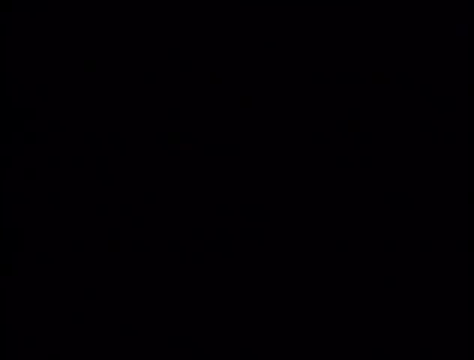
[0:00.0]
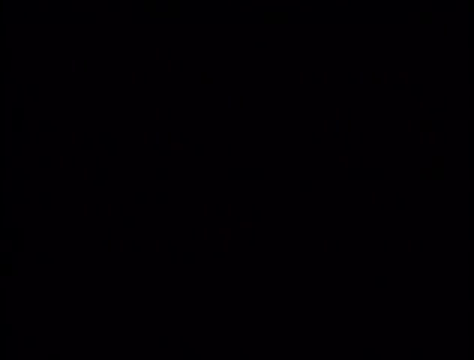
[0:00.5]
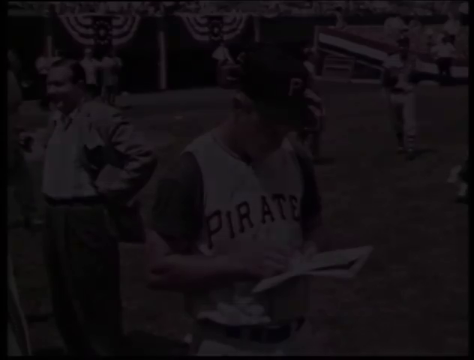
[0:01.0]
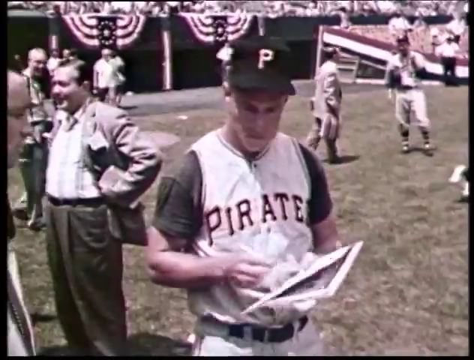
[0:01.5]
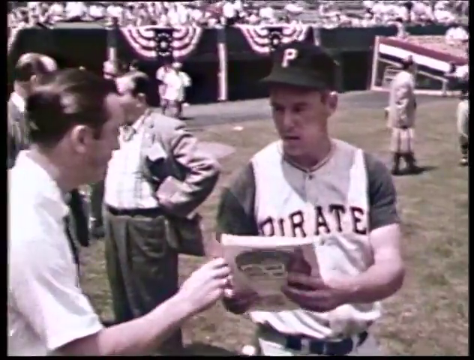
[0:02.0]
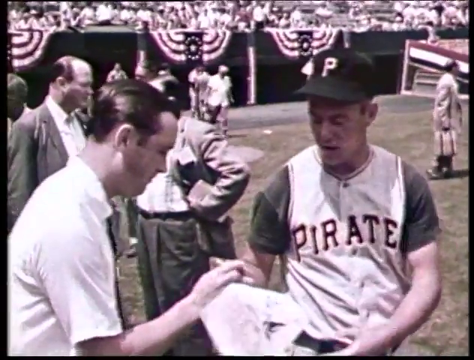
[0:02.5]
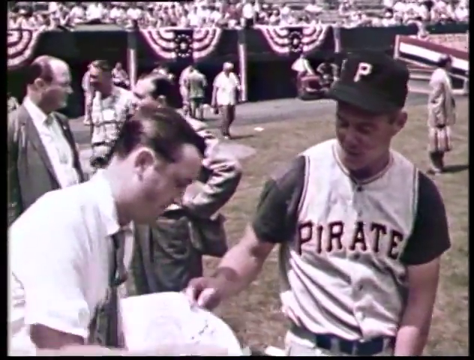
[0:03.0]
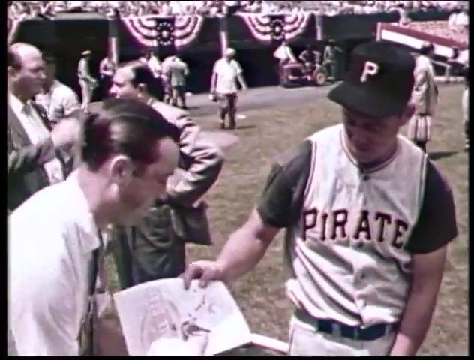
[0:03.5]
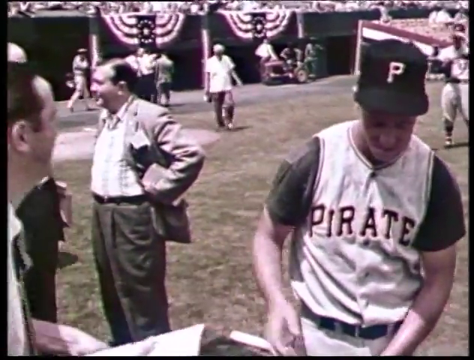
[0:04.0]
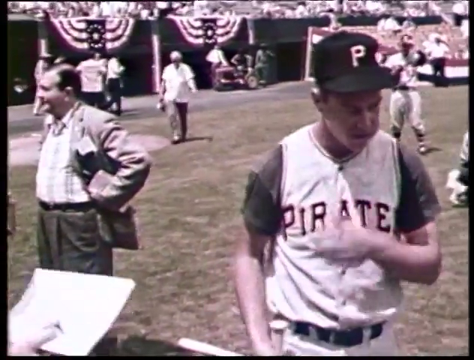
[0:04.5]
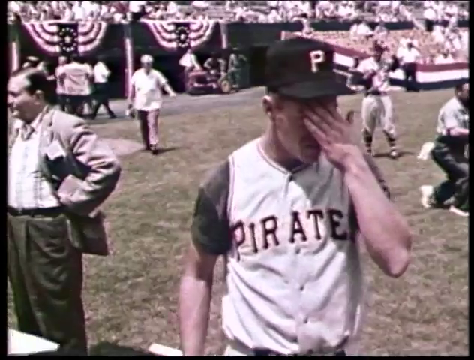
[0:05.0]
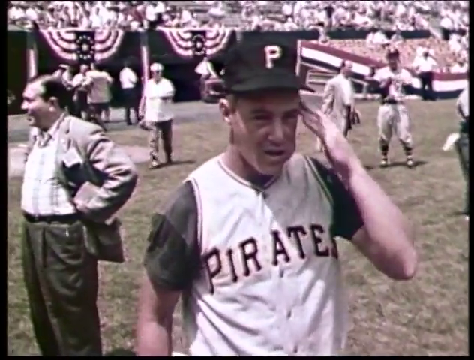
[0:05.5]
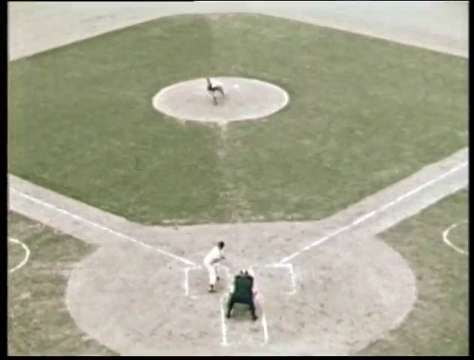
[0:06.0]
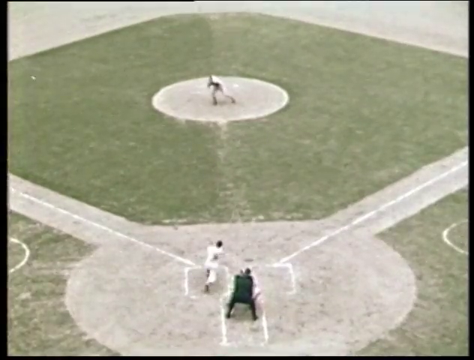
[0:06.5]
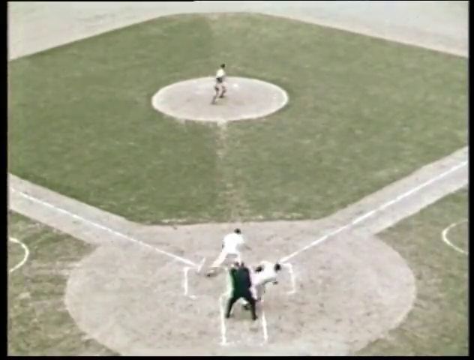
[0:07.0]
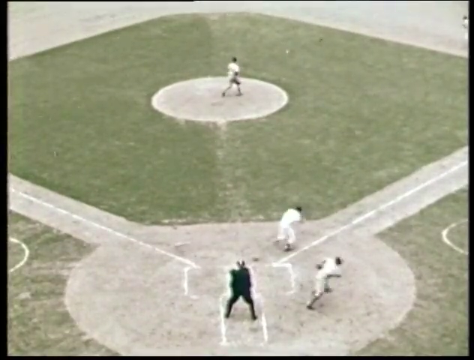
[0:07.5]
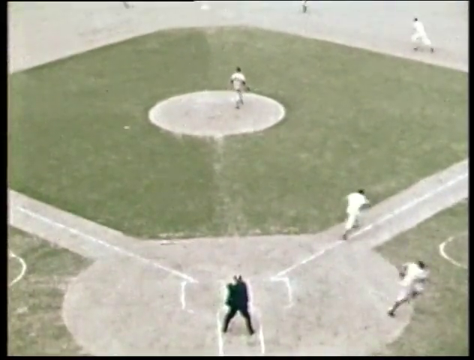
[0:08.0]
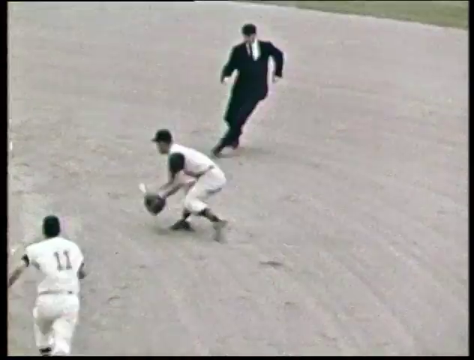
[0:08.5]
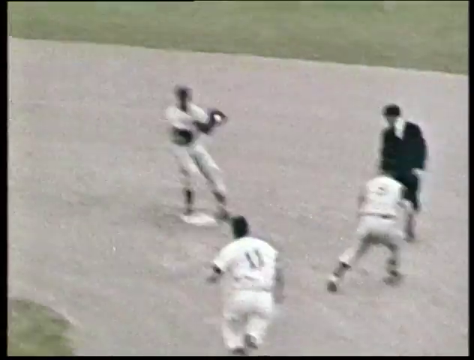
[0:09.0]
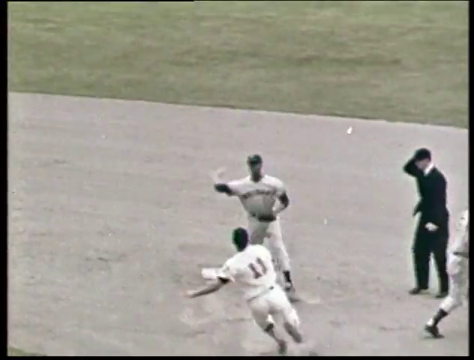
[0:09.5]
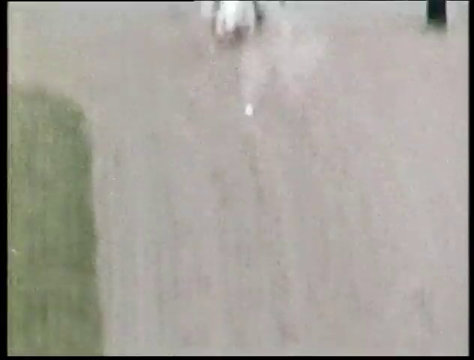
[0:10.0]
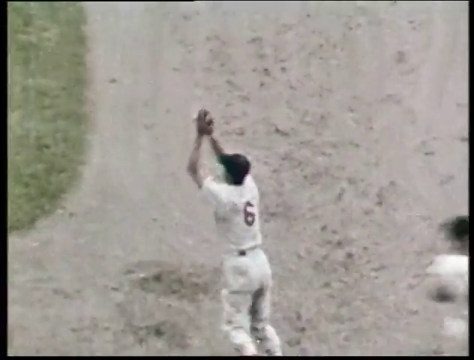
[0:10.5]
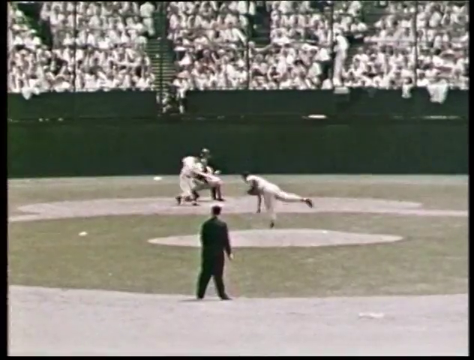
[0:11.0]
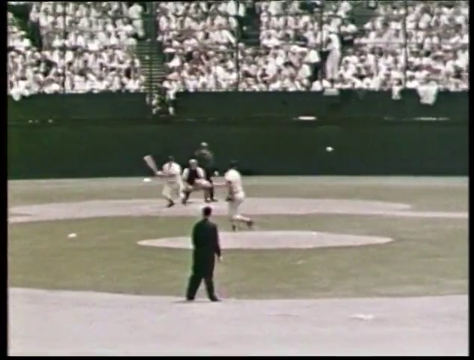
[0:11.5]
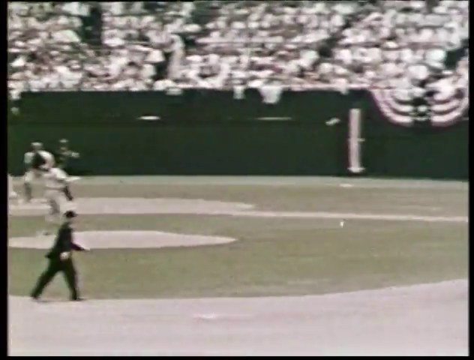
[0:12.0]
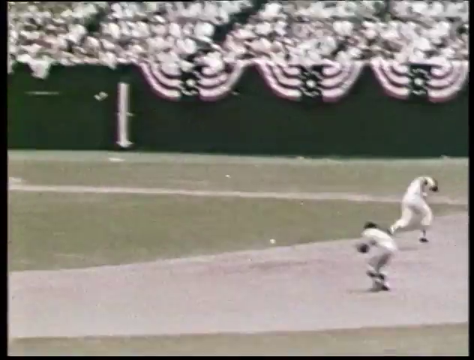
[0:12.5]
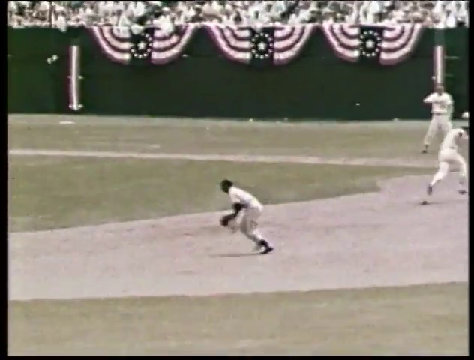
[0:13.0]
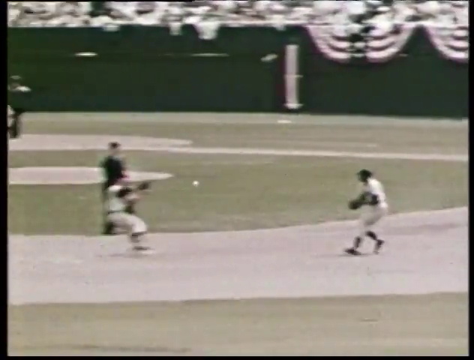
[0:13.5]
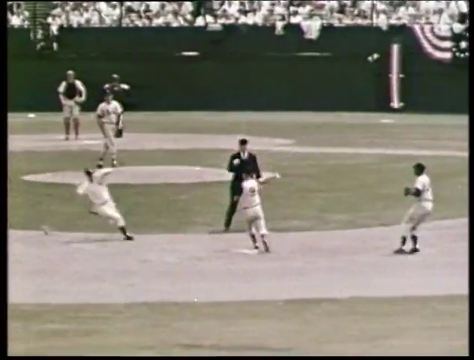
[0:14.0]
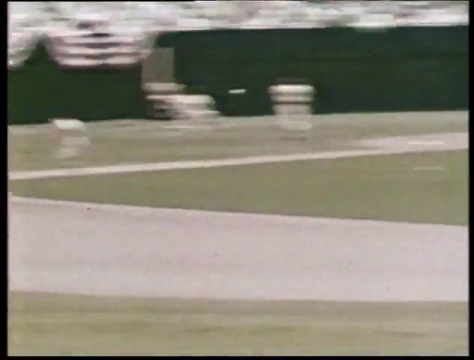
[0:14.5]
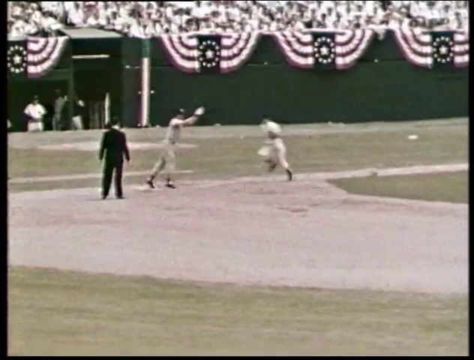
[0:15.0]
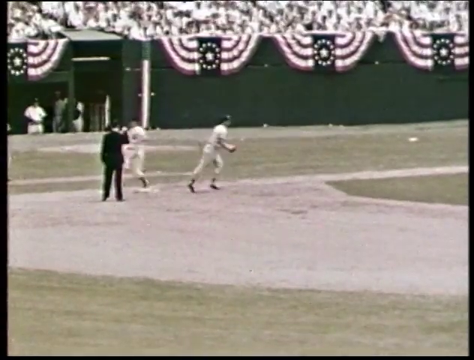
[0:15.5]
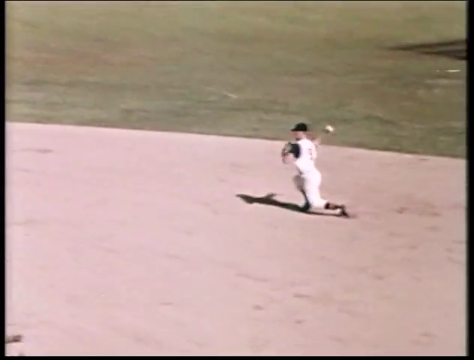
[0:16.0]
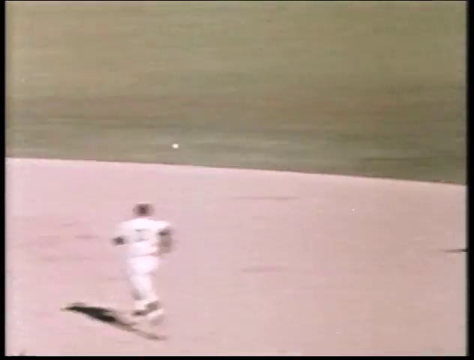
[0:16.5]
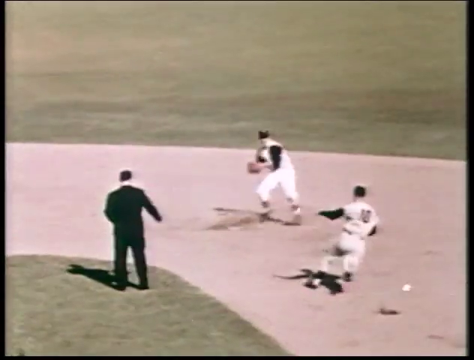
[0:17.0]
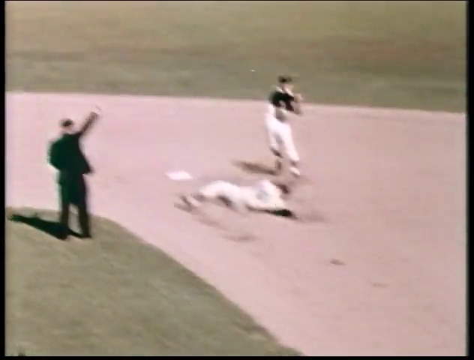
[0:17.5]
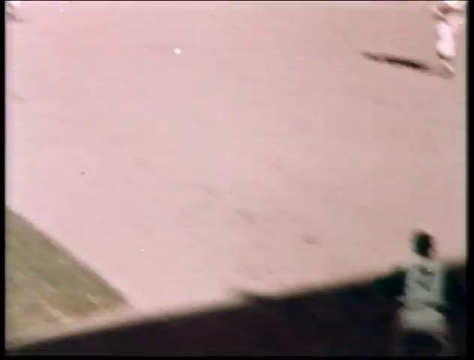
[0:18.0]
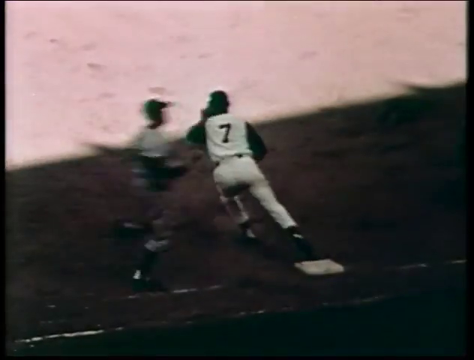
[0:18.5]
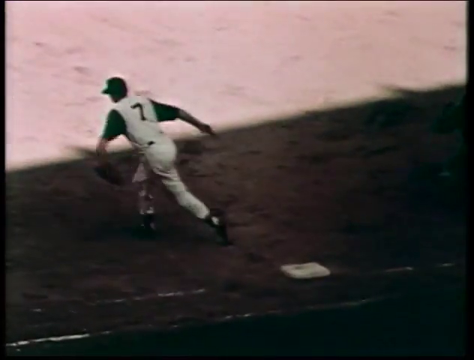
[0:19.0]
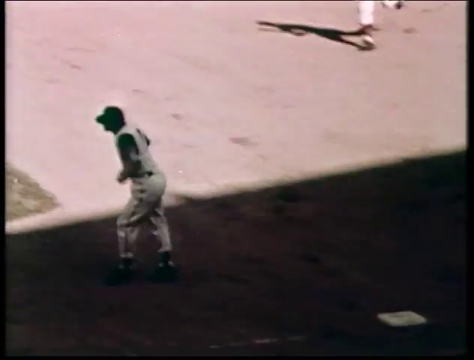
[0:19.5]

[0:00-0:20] An old black-and-white video clip appears to relate to the Pittsburgh Pirates. A gentleman in the center has a sheet of paper in front of him. He wears a black cap with a white P on it and a white vested shirt with green sleeves and black lettering on the front reading "Pirates", and he is standing on a green baseball field with a black wall behind him. Other people are on the field as well, all white males, some in suits and jackets and some in baseball uniforms. He seems to be signing some sort of document for someone as he rubs his brow. The view then shows a baseball diamond, with the backcatcher and an umpire in black in the bottom portion of the frame. The batter at the plate smacks the ball thrown by the pitcher on the mound in the center. The diamond field is green, with gray and white-lined dusty base paths along which the batter runs. The play goes to the shortstop, who gives the ball to the second baseman at second base, who throws to first to get the runner out at first base. The play is then shown backward and replayed.